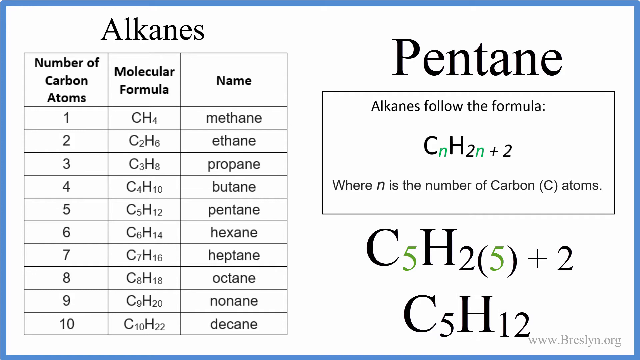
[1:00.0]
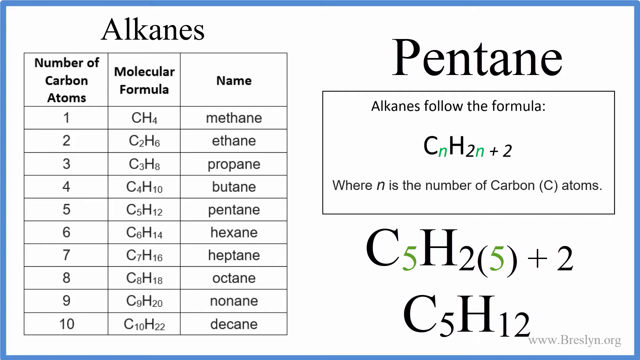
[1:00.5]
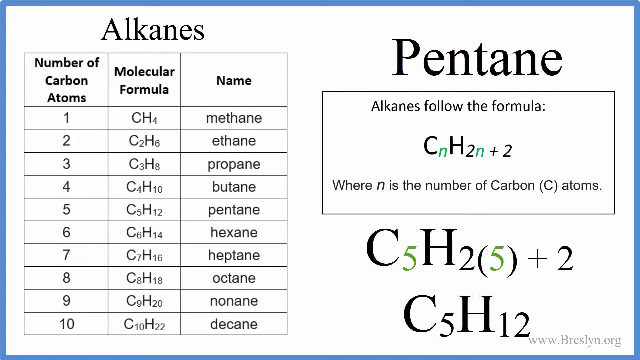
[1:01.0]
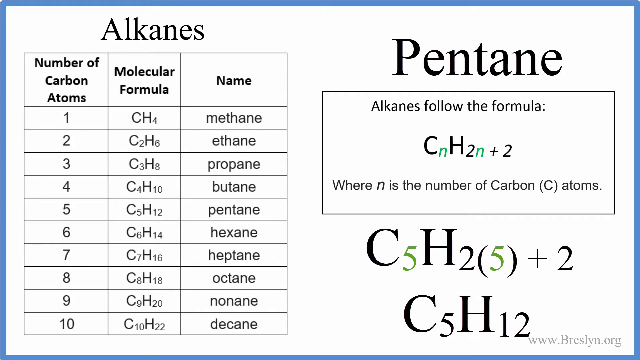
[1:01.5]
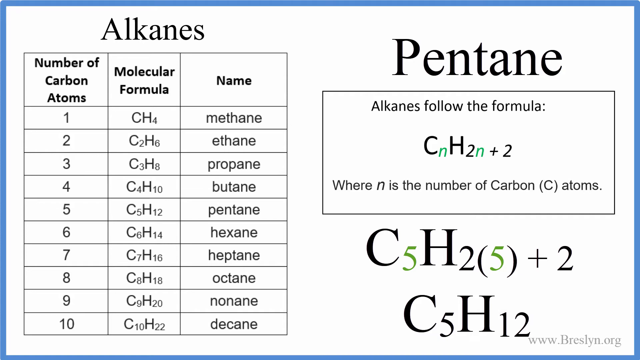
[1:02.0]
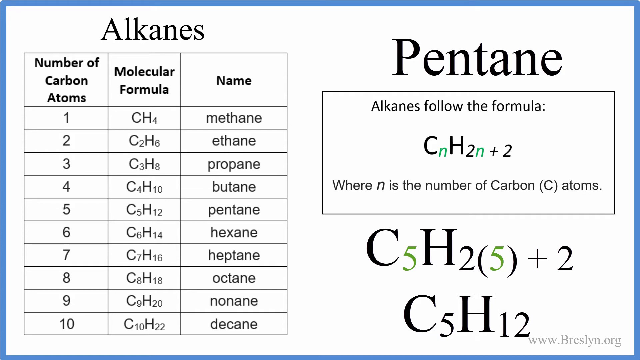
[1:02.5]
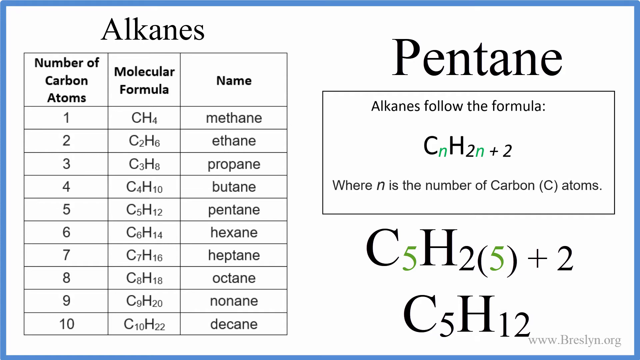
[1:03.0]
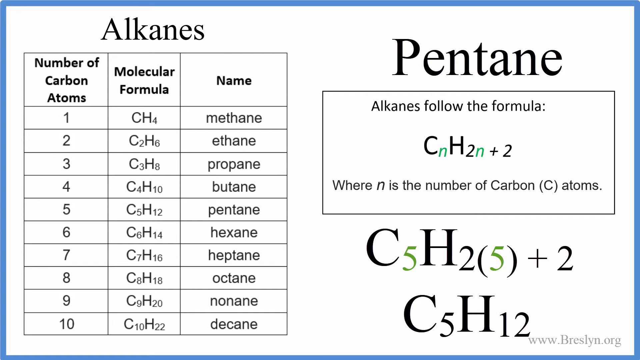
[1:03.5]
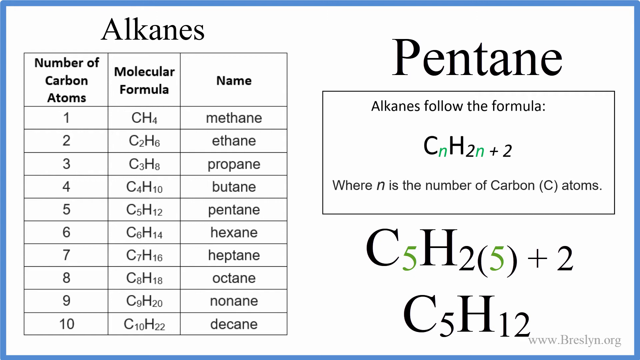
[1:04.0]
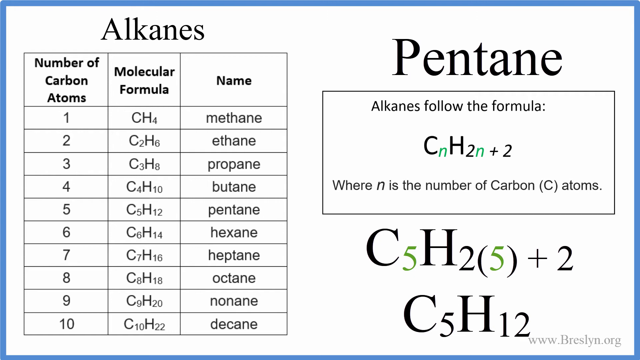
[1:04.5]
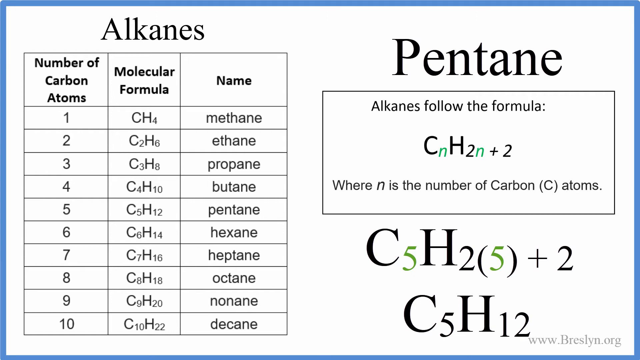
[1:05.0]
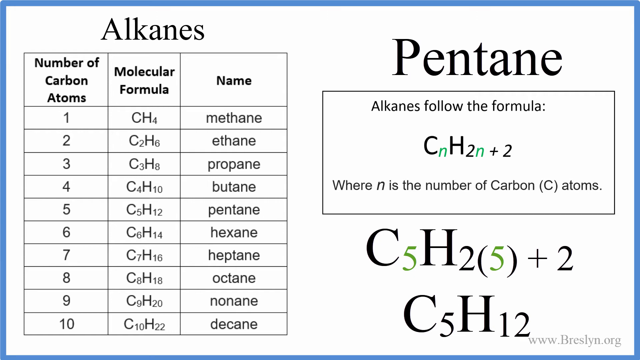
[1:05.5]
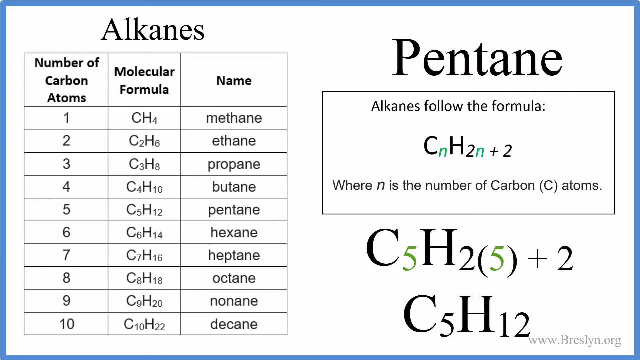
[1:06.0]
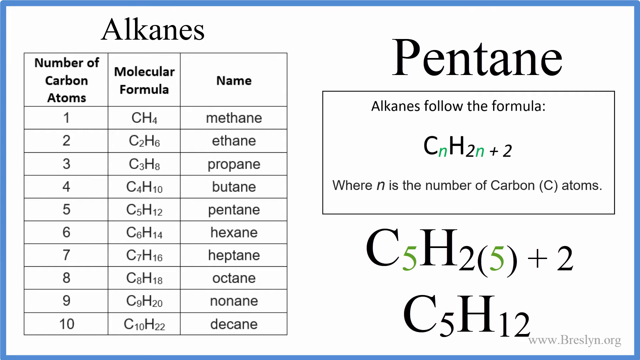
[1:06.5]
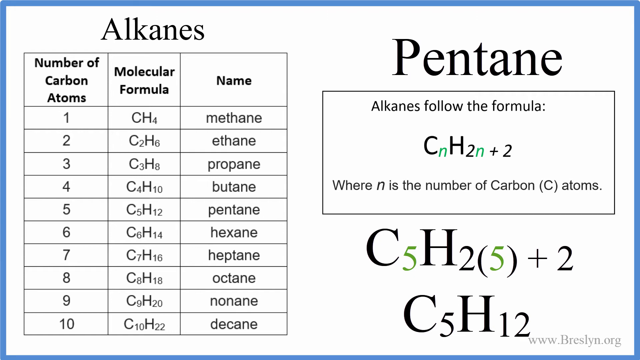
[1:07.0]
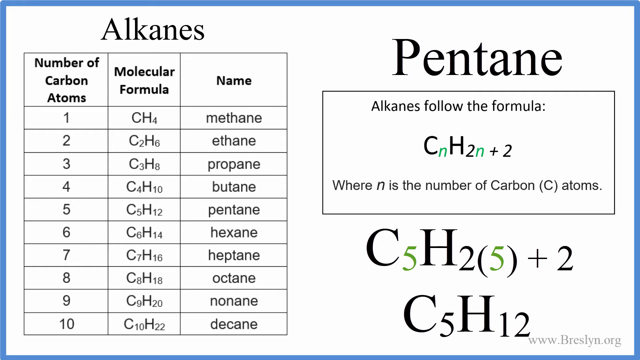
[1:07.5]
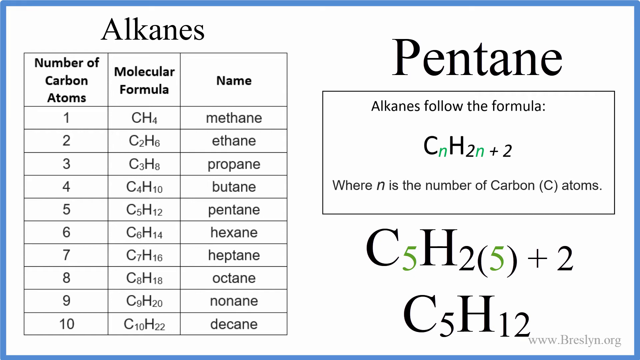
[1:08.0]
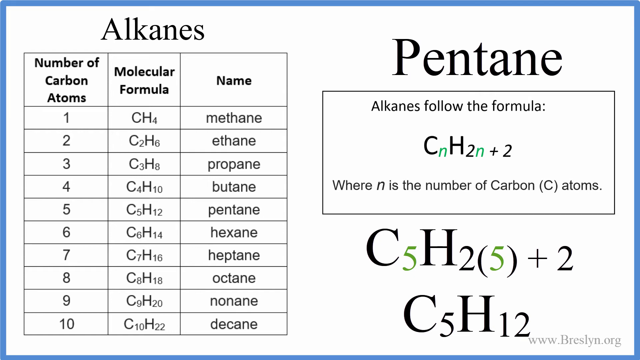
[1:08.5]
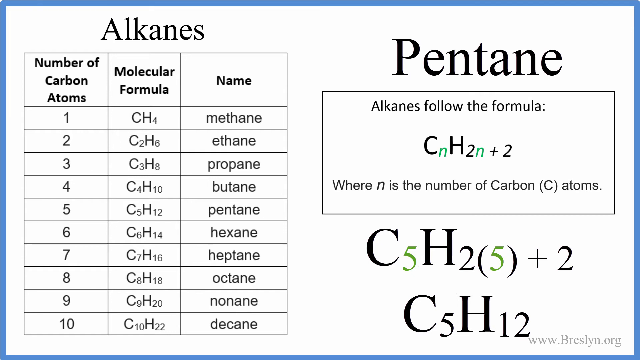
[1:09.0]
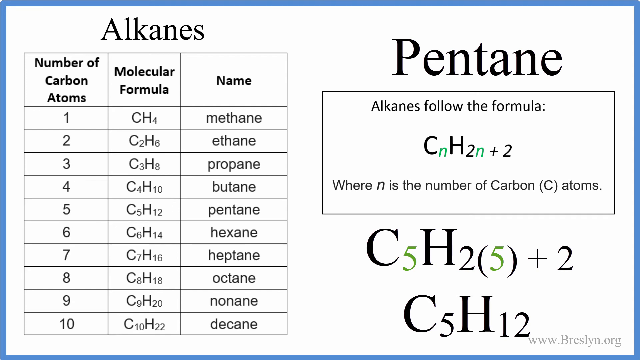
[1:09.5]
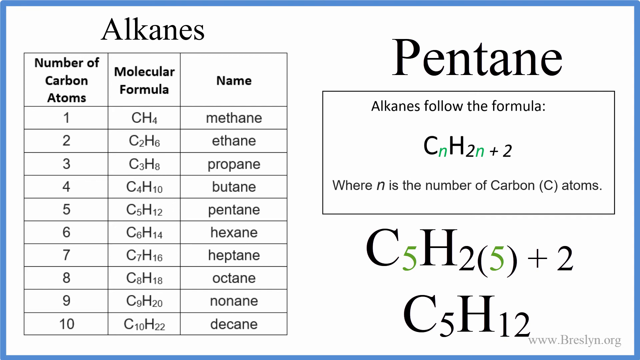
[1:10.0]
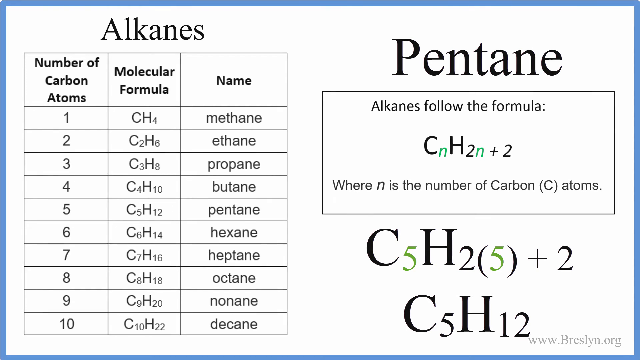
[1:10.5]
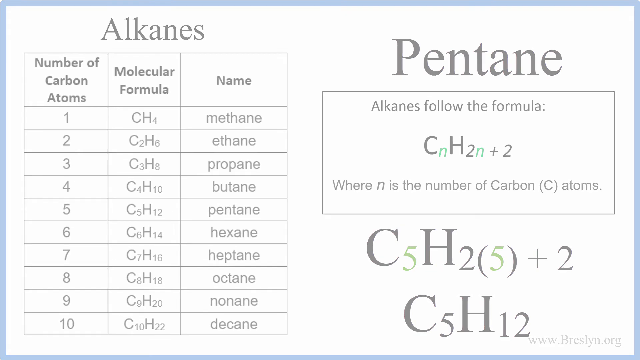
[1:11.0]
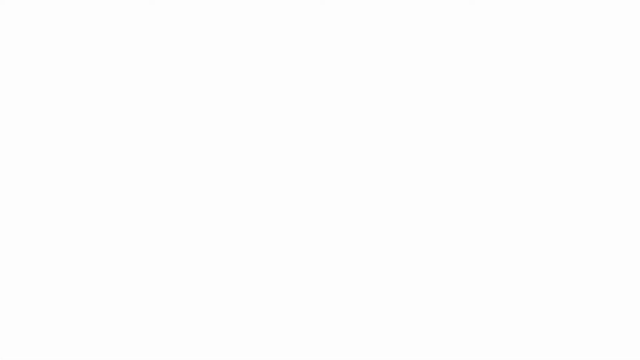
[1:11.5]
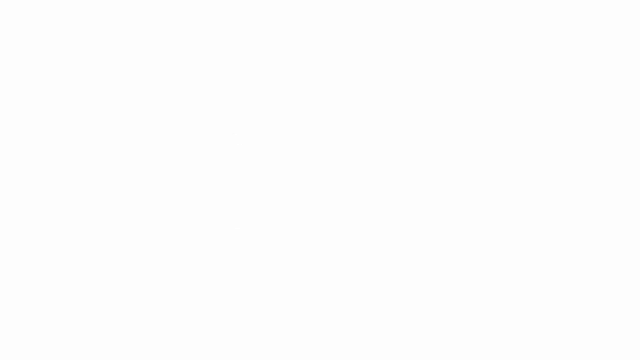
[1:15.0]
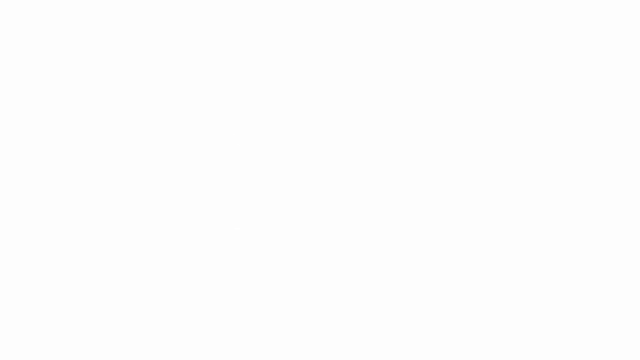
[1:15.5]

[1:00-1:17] The video stays on this slide for a few moments, showing the steps of the formula. Then everything fades to a white screen, which remains for several seconds as the video ends. No arrows are used to point out changes; a single example is used, and there are no graphics other than the black and white molecular structure.